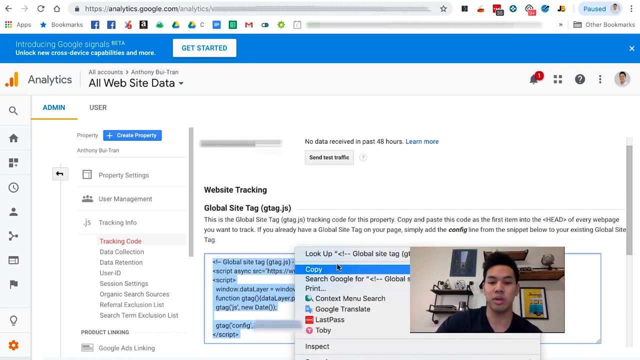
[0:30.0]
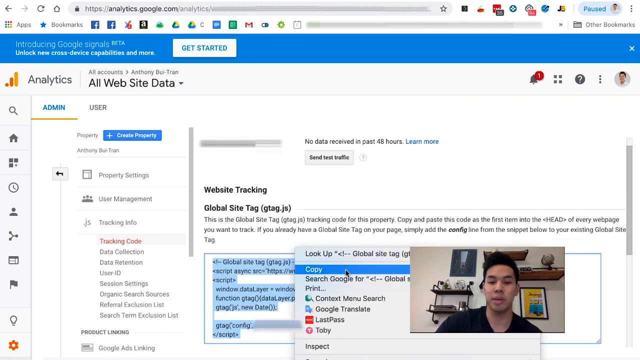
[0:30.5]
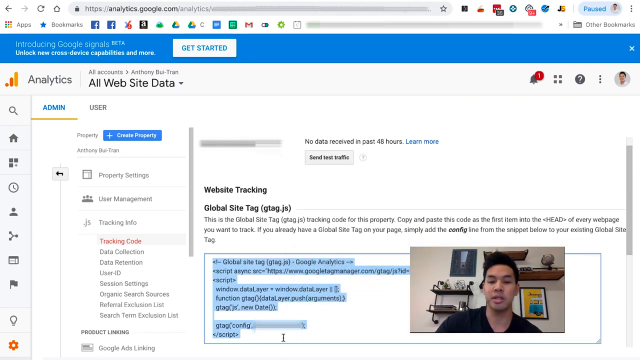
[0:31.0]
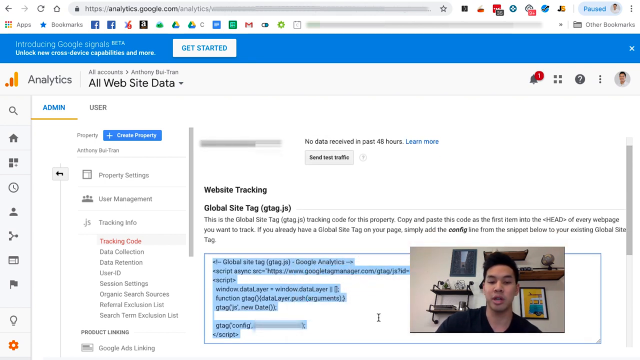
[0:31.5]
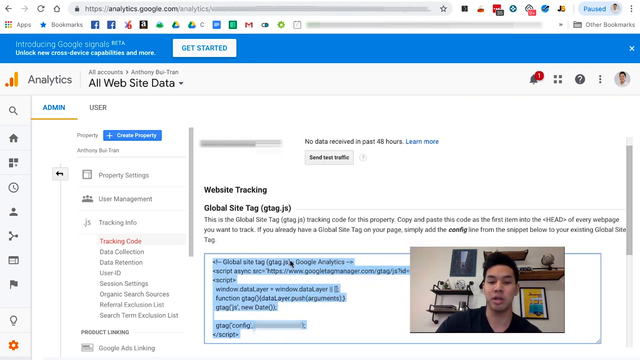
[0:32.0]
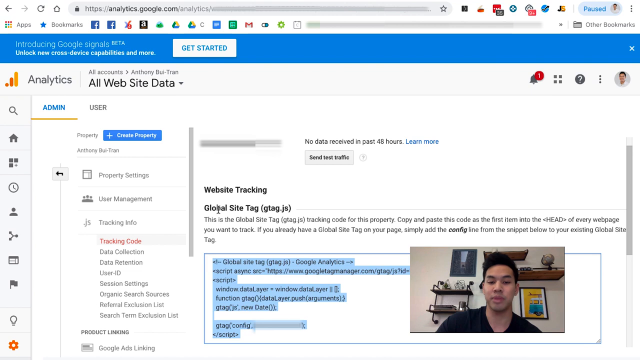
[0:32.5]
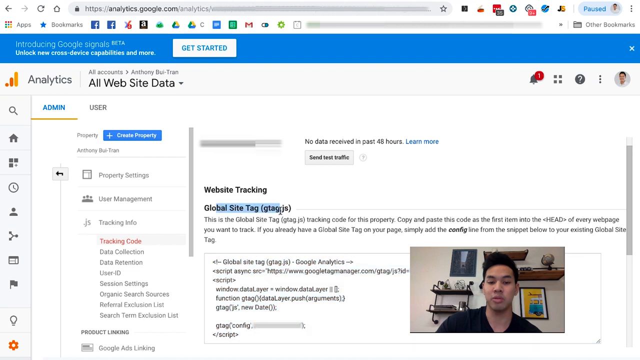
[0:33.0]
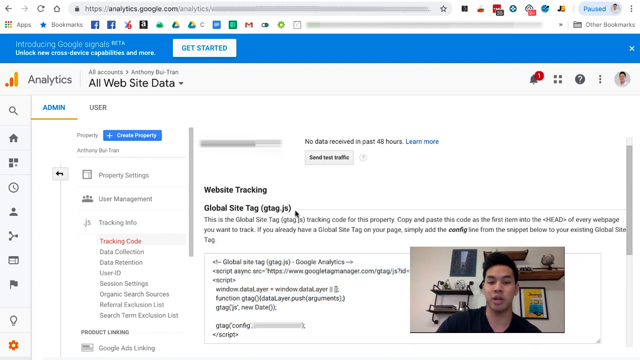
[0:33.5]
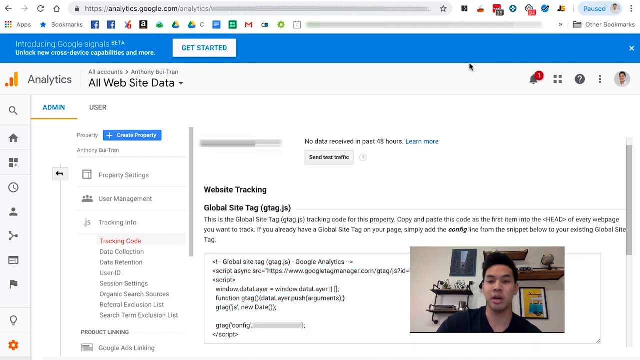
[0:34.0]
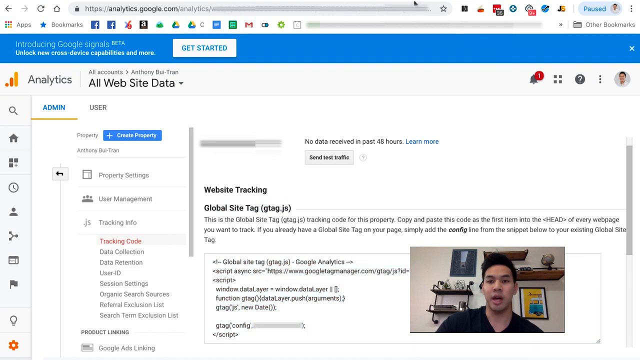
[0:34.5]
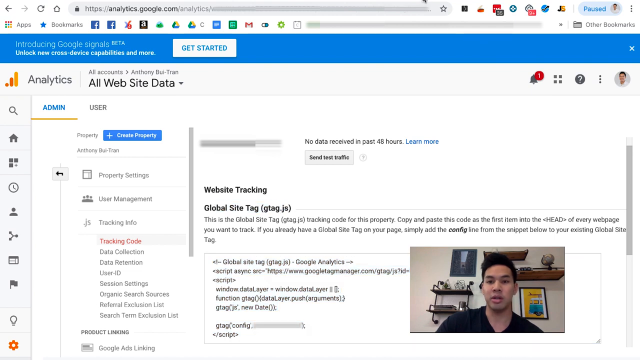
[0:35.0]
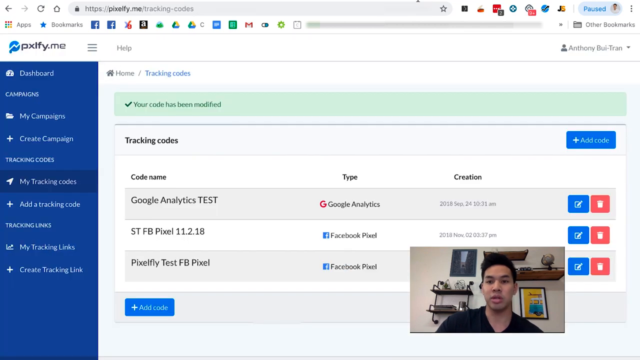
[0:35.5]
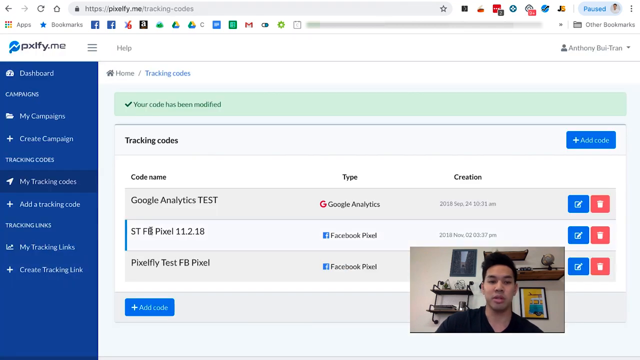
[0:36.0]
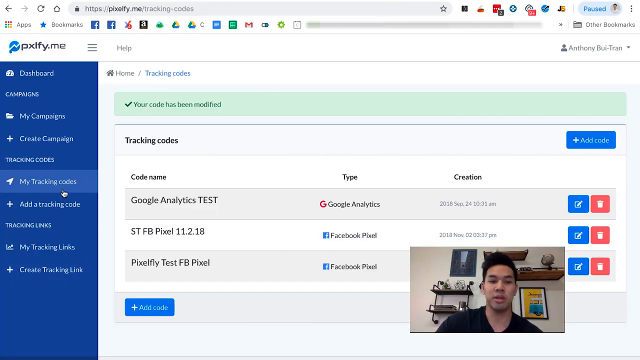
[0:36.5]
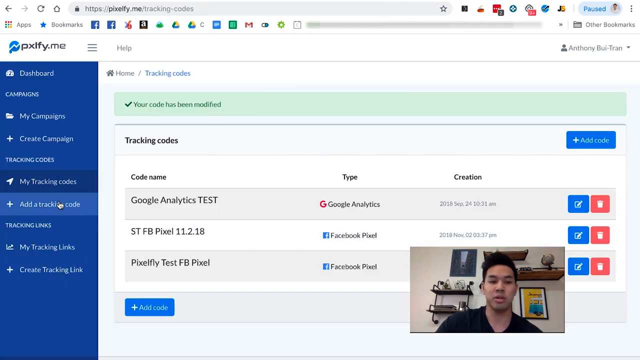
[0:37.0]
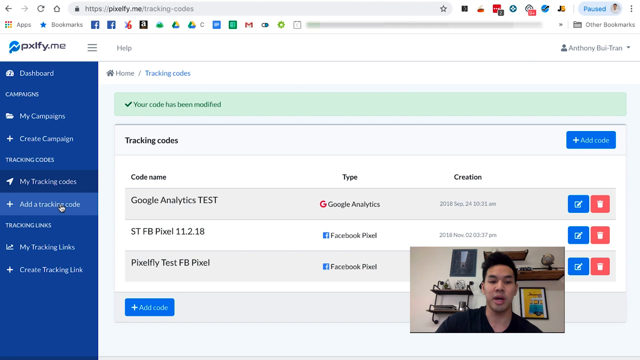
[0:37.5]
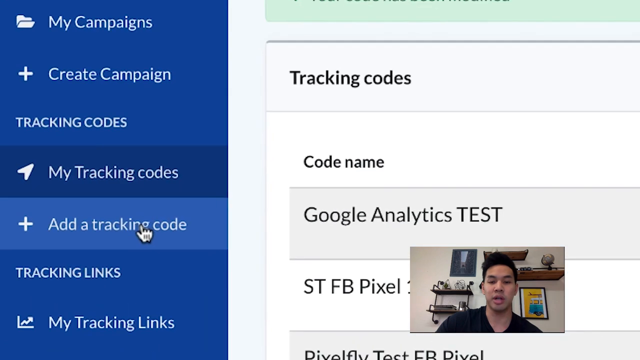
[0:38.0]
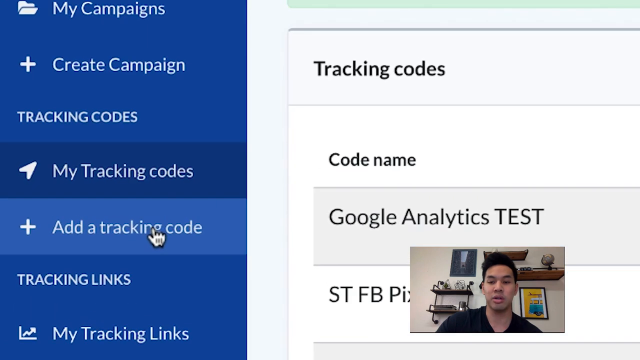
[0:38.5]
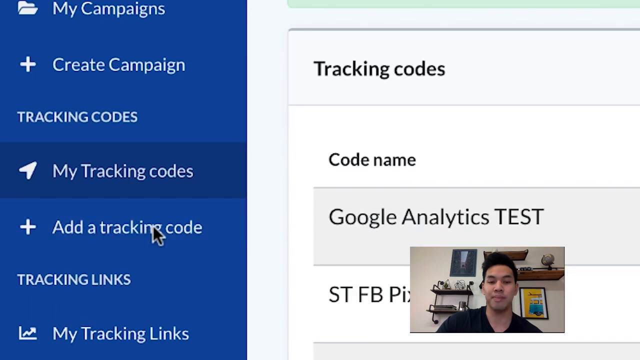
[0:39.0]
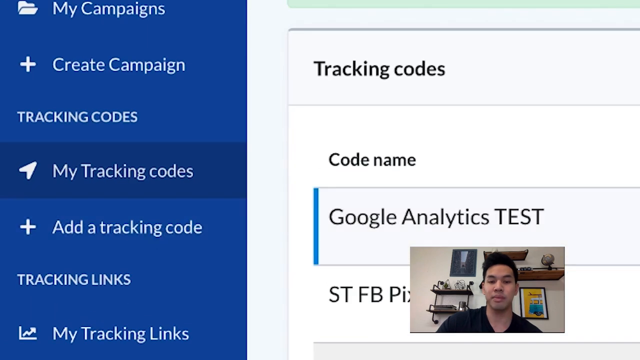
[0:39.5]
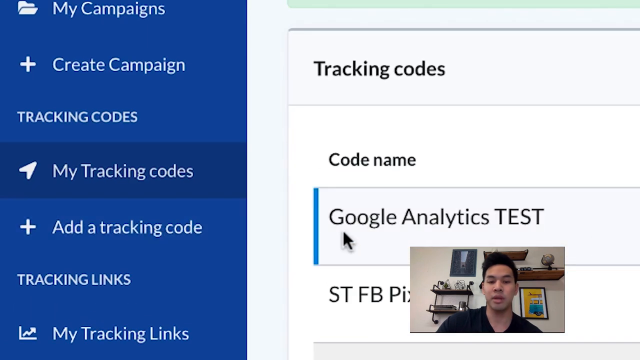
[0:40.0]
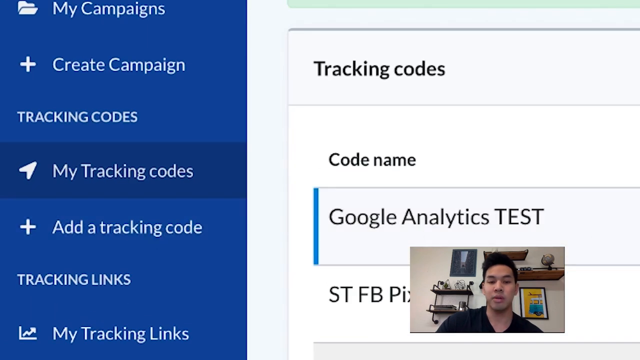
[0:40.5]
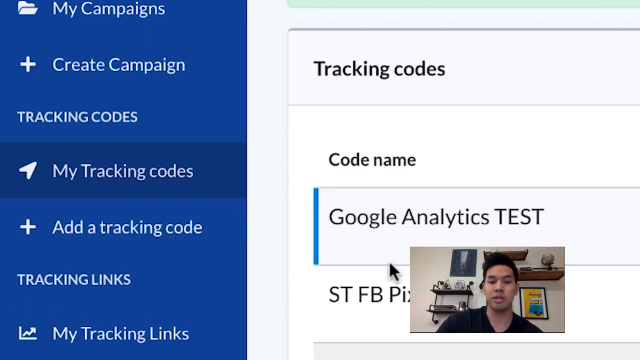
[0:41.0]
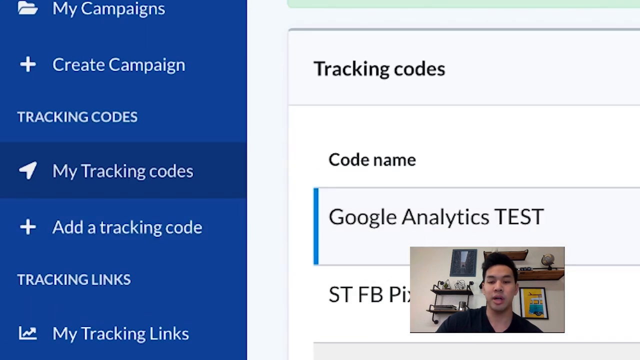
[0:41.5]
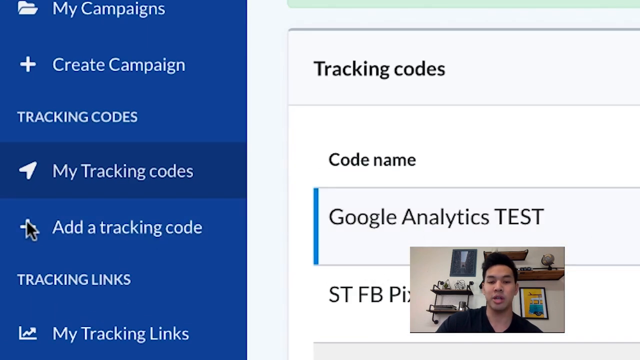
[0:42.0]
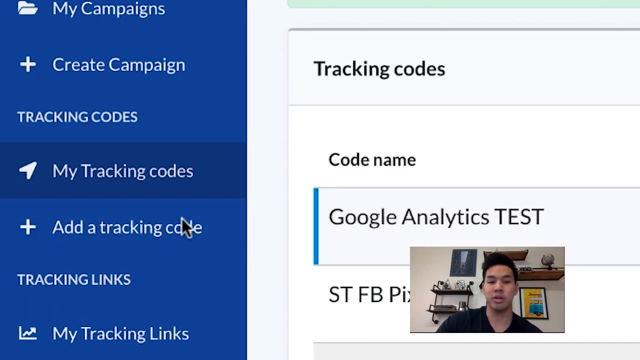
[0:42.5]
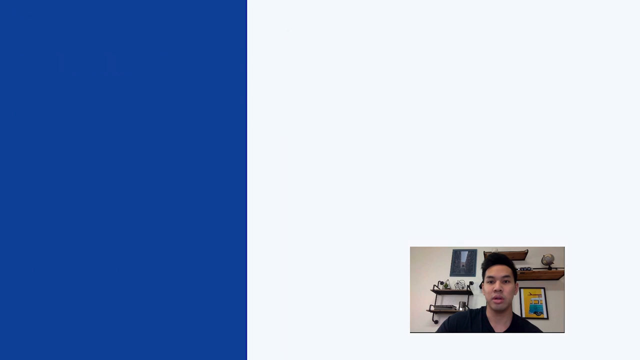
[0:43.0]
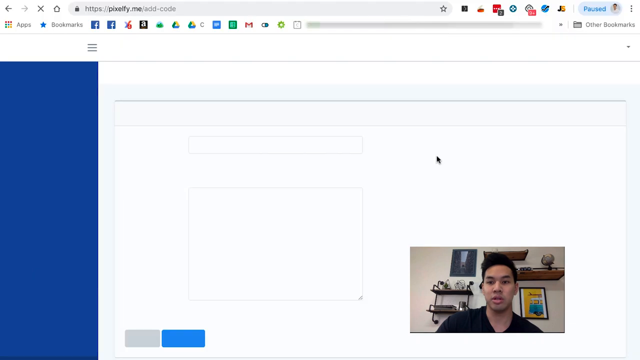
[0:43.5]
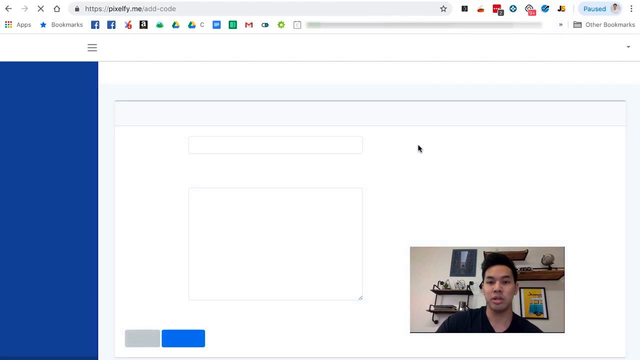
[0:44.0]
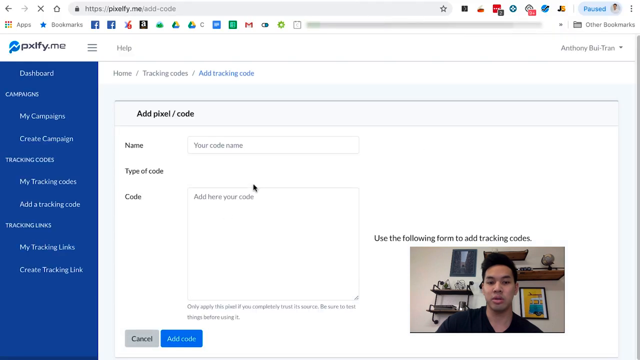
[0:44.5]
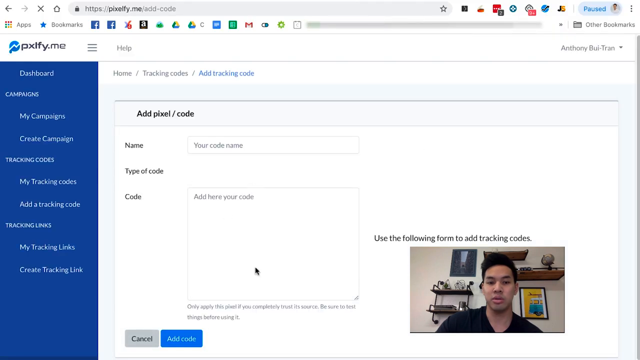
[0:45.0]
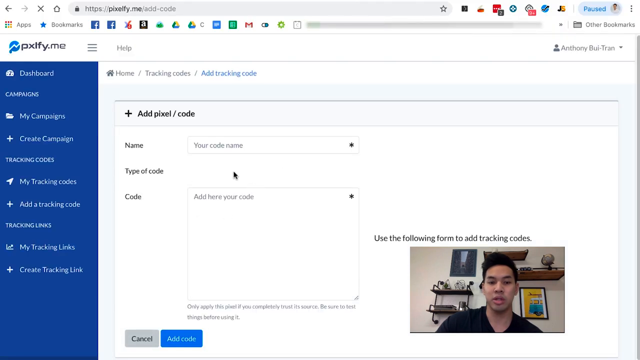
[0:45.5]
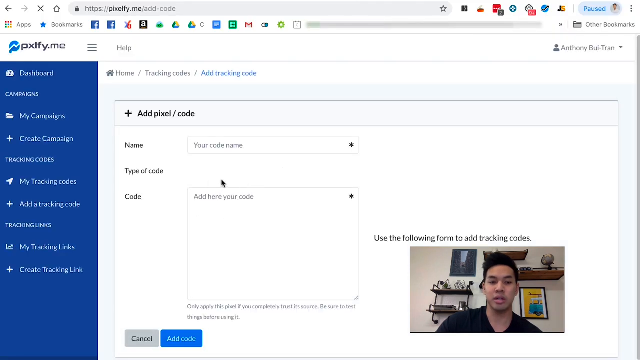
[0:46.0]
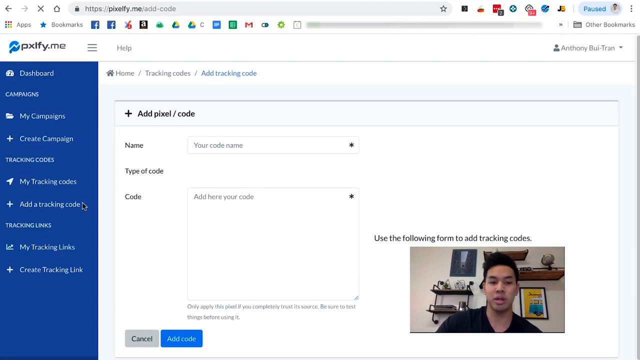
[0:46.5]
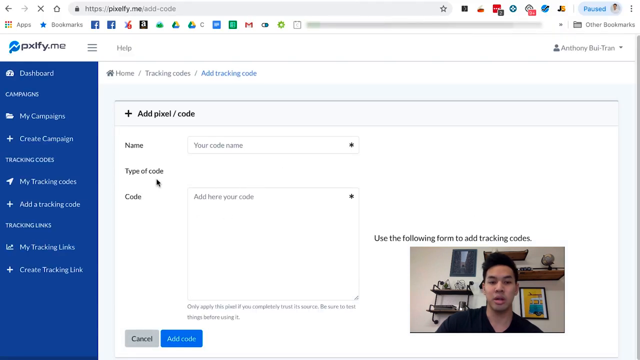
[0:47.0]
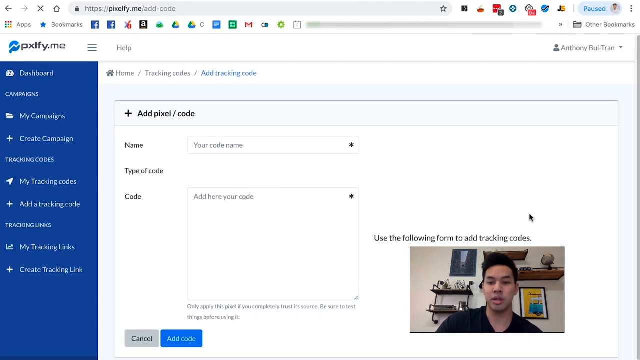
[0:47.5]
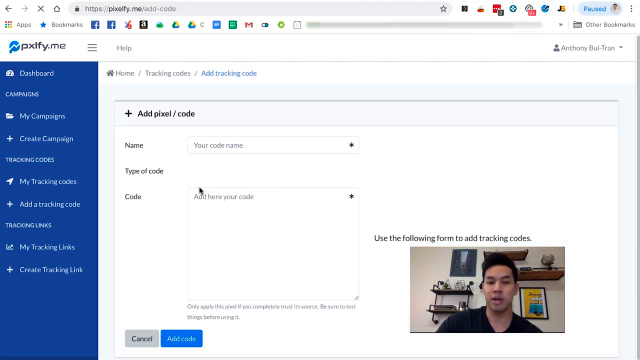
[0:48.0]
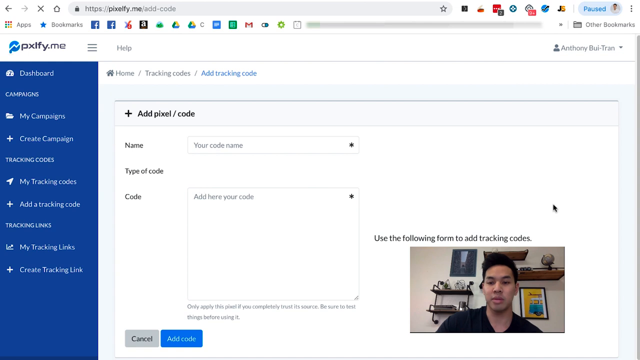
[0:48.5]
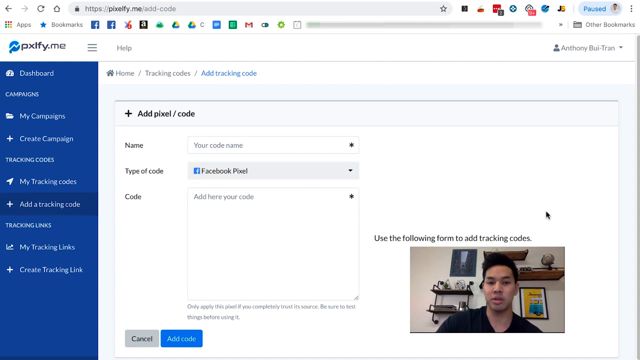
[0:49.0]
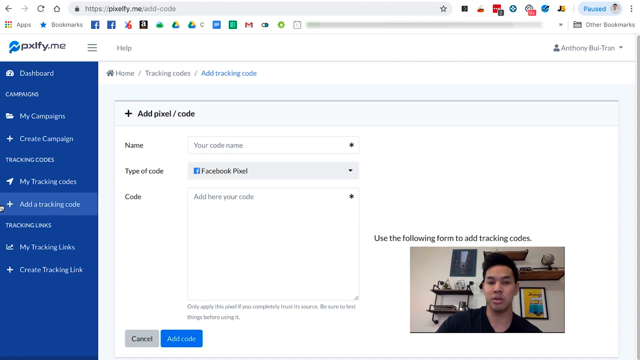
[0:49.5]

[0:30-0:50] A browser shows the Google Analytics dashboard, on a page with a website tracking configuration and a snippet of JavaScript visible under the title "global site tag". In the bottom right of the screen, a small video window shows a man with black hair in a black top, sitting in front of various small shelves against a wall and talking into the monitor. A piece of JavaScript is highlighted on the page, a menu has appeared, and the mouse hovers over the copy option, which is clicked, presumably copying the JavaScript. The man continues to talk into the screen, highlighting various things such as the title "global site tag (gtag.js)". The mouse then changes tab and zooms in on the add tracking code option, which is selected, and a new window appears at pixelphi.me/add-code, on an add pixel/code page. The user picks an option for type of code, a menu appears, and they pick the option Facebook.